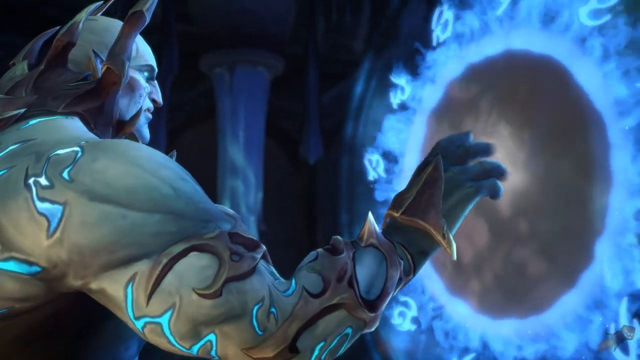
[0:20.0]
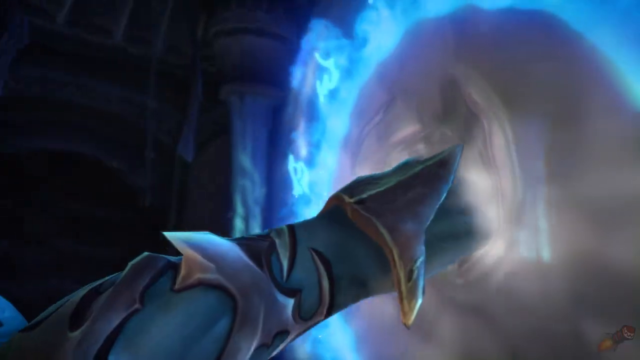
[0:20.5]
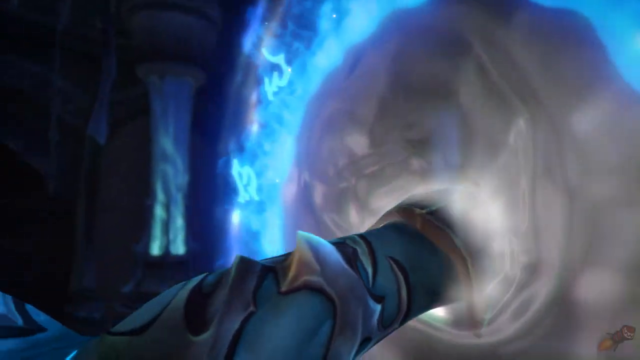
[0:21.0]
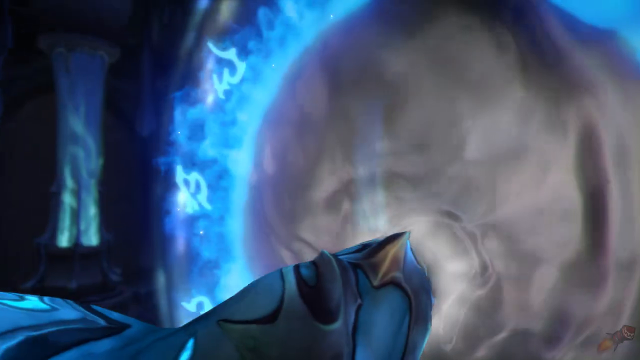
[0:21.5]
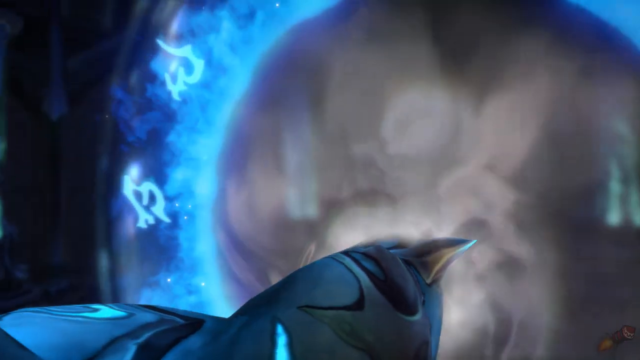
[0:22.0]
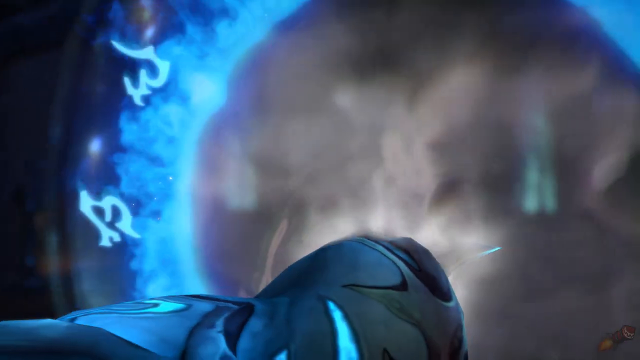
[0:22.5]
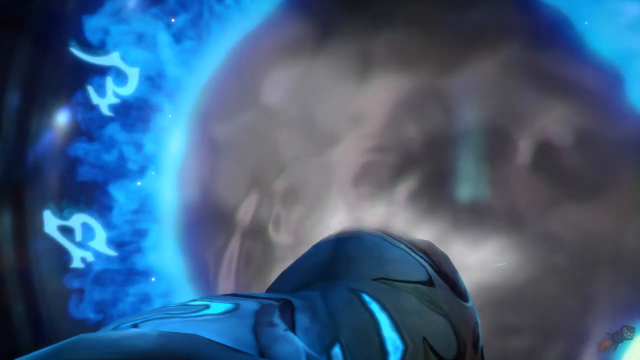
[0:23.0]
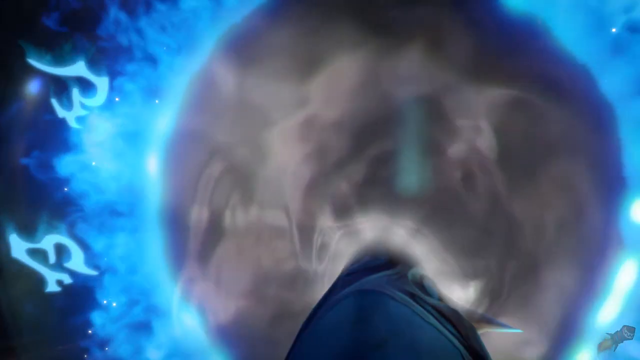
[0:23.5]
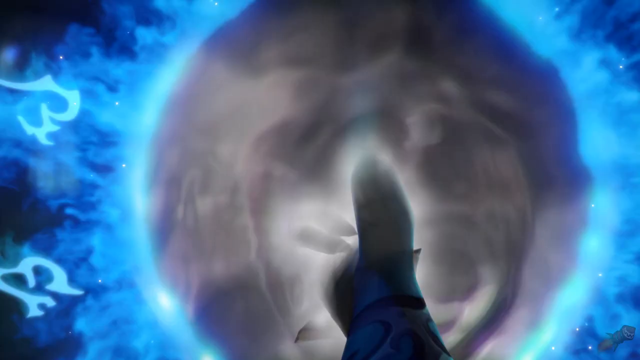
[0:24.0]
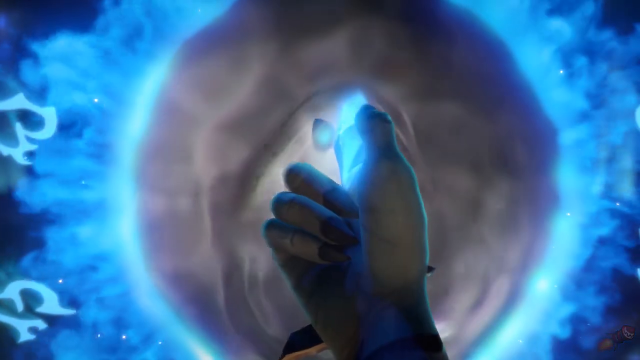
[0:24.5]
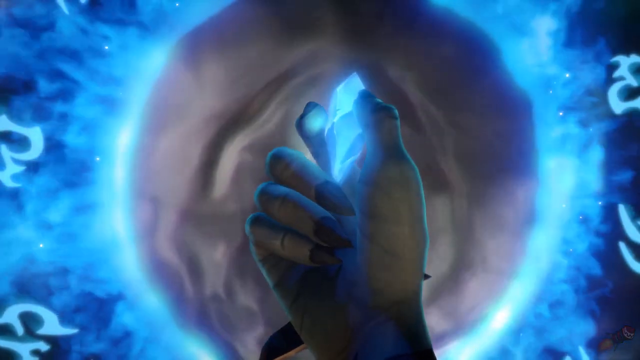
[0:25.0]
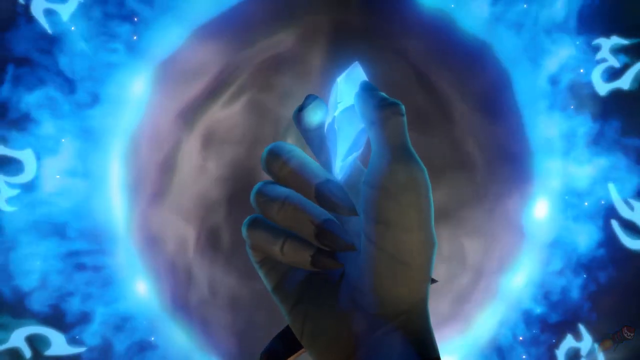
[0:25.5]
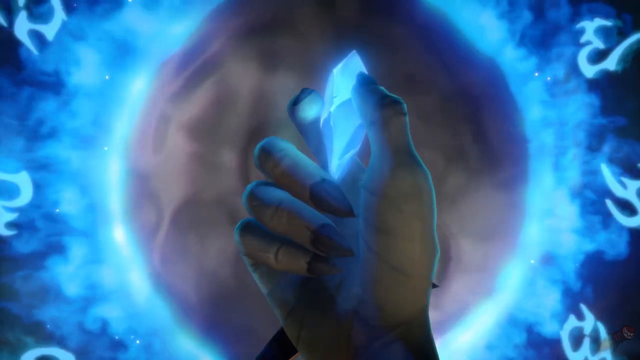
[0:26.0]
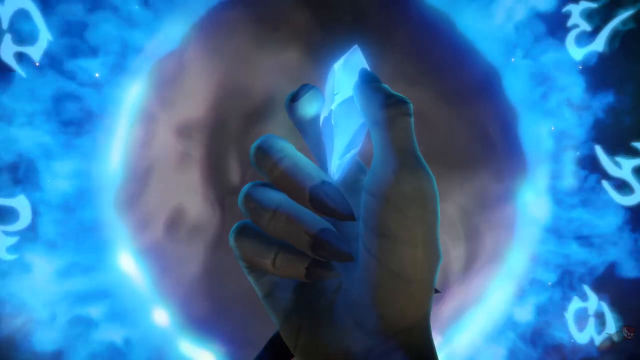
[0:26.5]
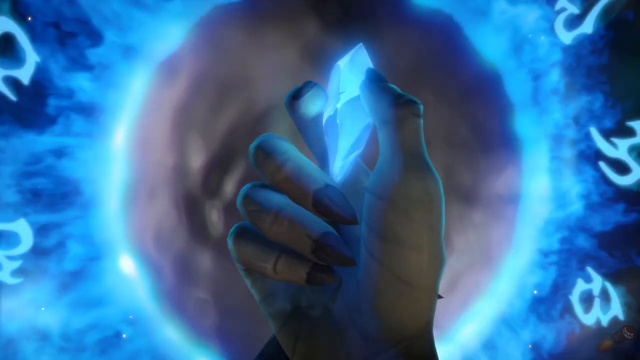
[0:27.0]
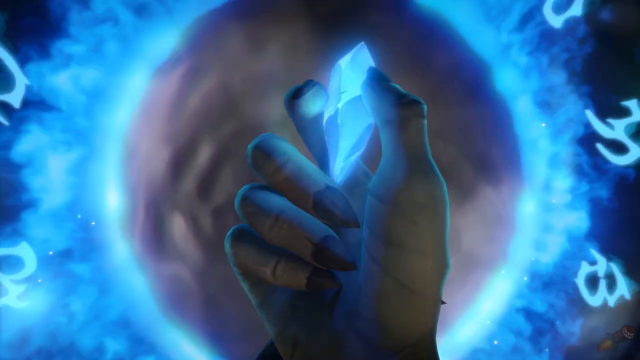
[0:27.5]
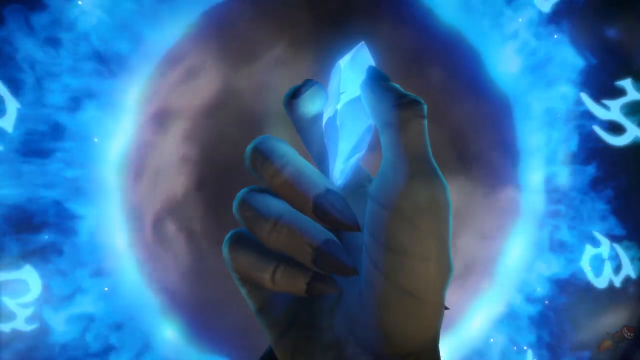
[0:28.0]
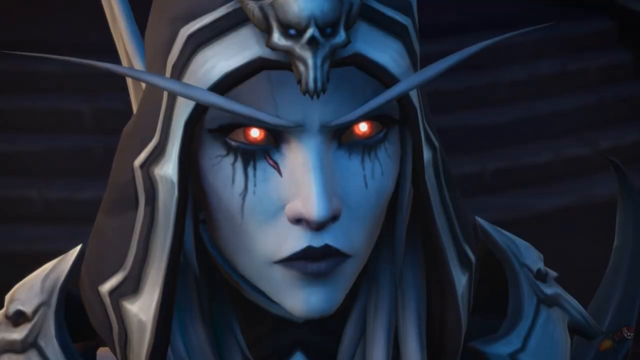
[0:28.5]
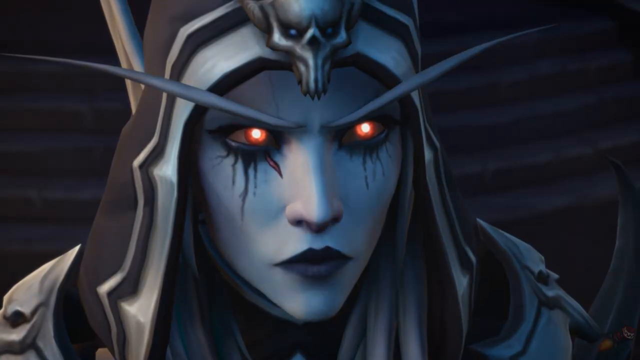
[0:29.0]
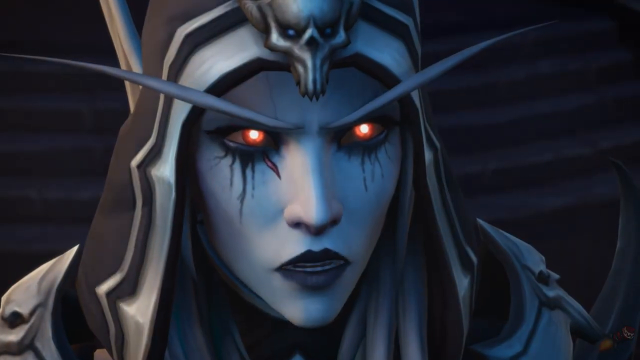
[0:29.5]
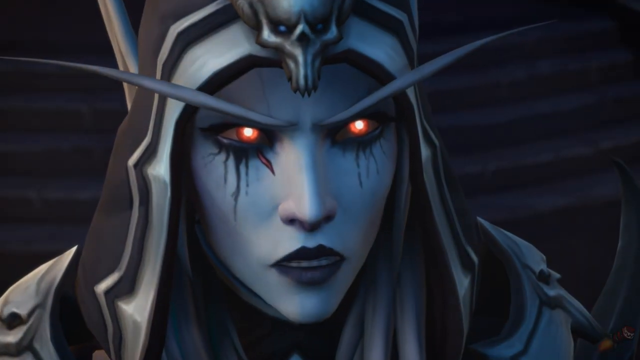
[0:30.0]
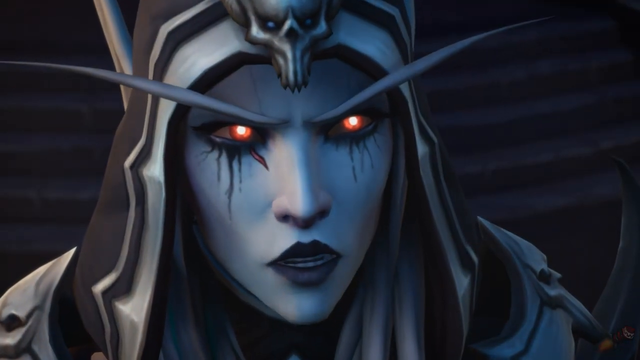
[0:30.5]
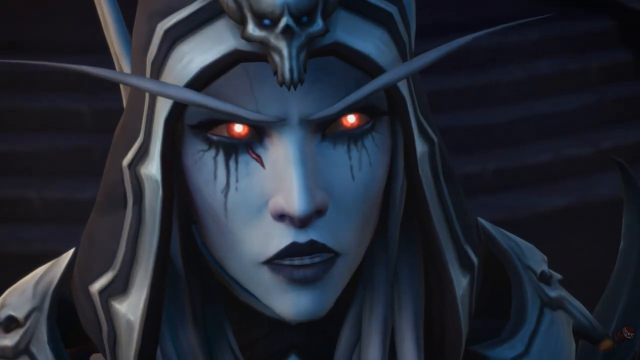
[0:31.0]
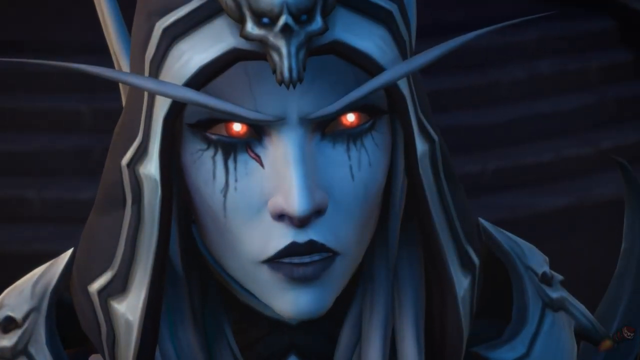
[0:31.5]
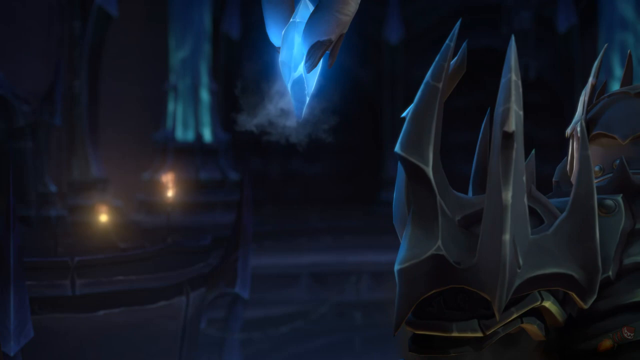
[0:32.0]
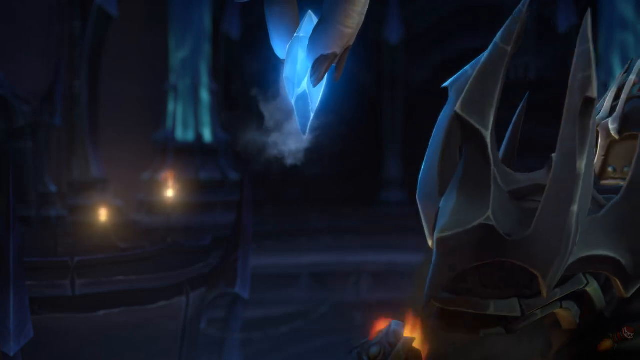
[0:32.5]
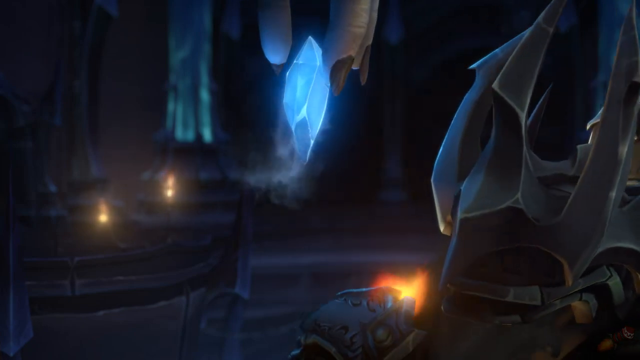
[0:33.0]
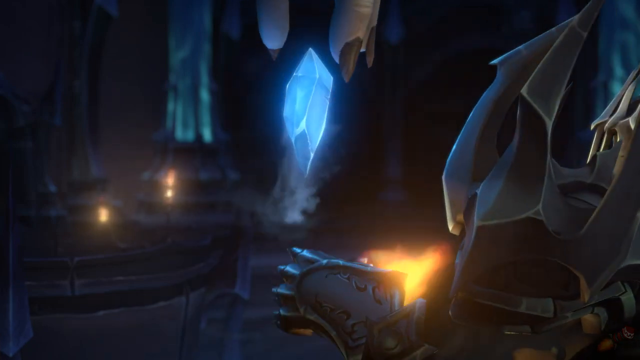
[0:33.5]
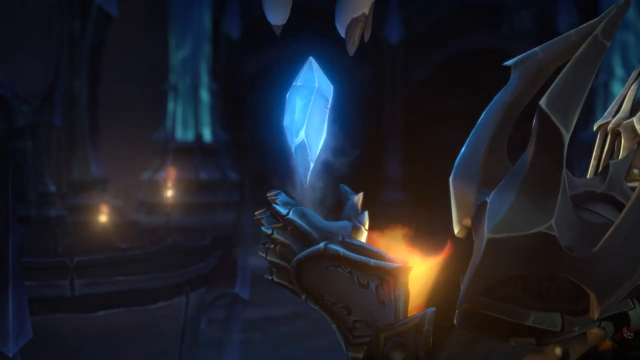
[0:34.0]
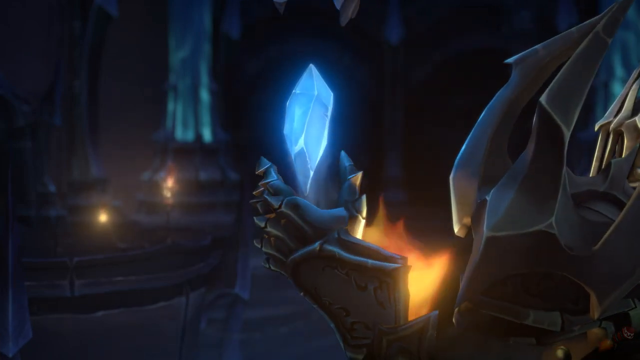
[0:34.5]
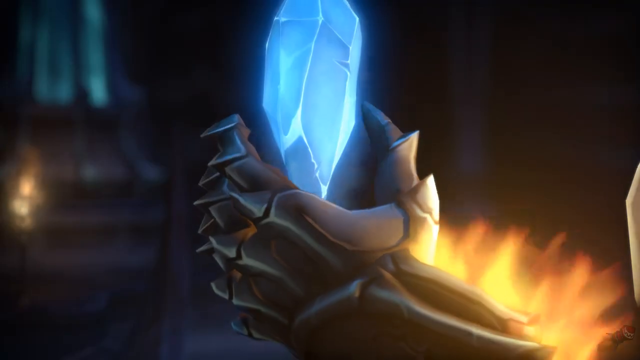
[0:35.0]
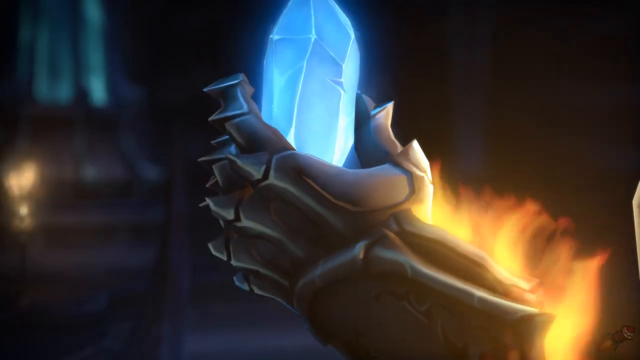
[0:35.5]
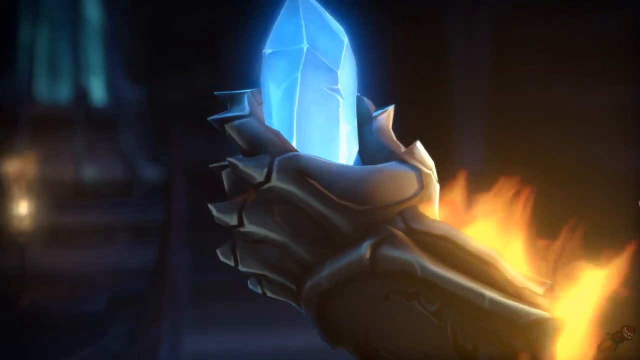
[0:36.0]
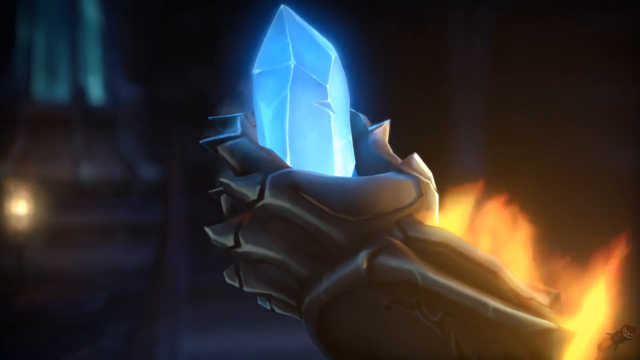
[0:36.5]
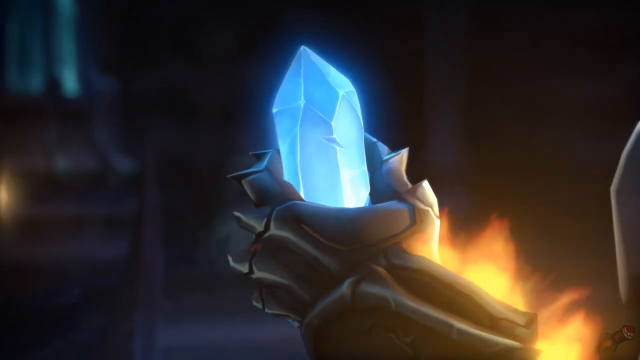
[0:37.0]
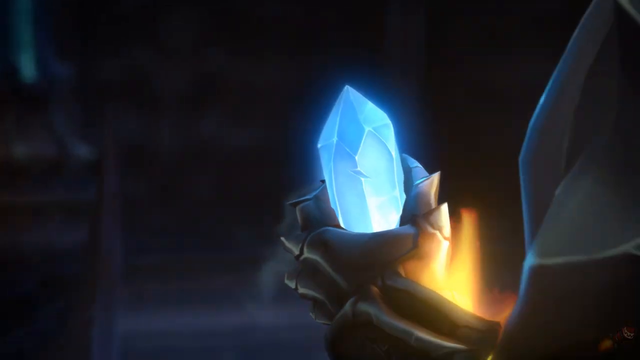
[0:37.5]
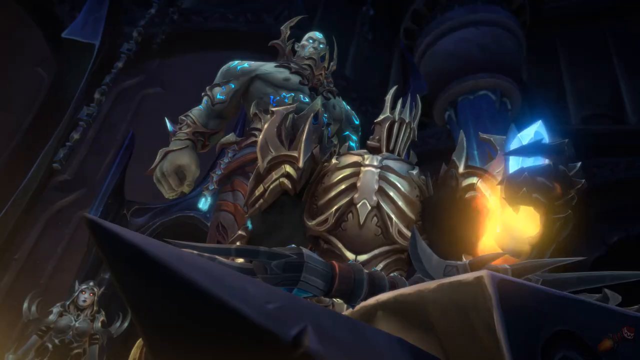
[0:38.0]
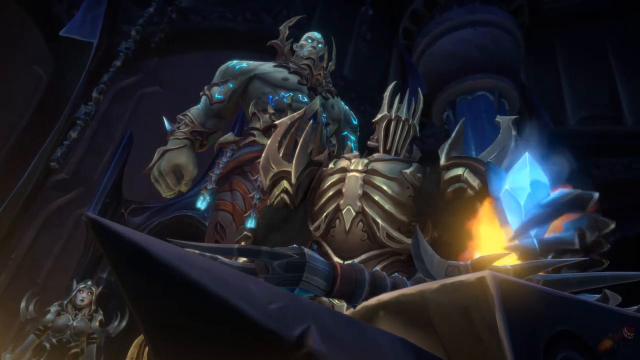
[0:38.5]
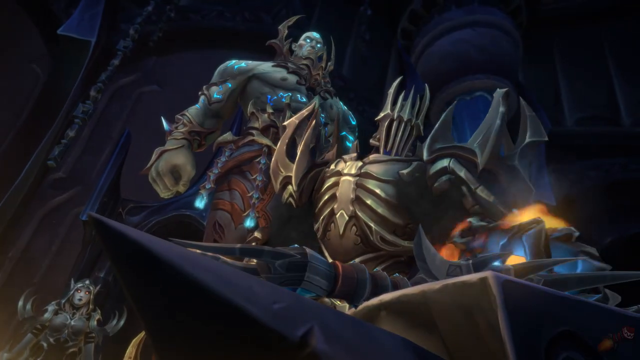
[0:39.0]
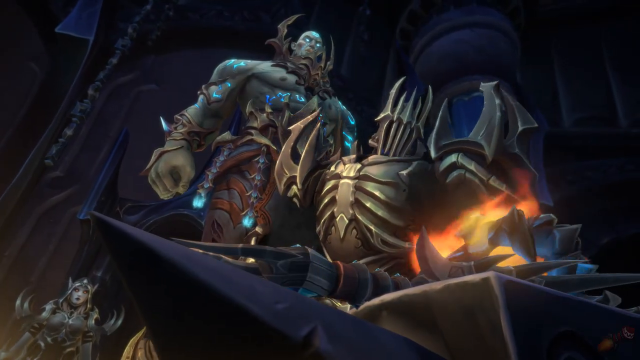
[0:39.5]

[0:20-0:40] In the video game, a 3D animated character holds up a blue crest, presenting it to other characters who are there. Many of the characters appear mesmerized by the blue diamond, which appears out of nowhere. One of the characters picks up the blue diamond and uses it for themselves, apparently trying to gain special powers. Many of the characters have a blue light on them.